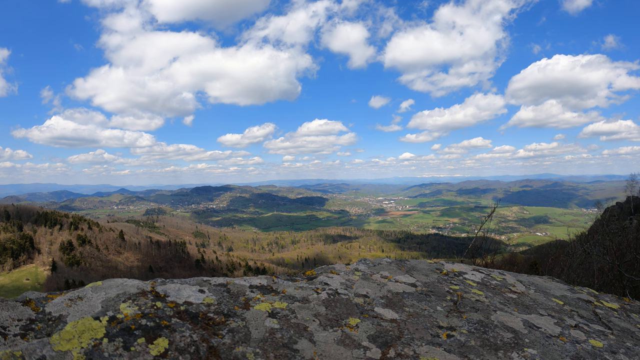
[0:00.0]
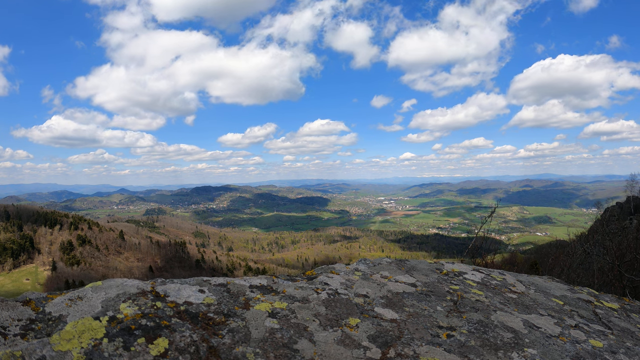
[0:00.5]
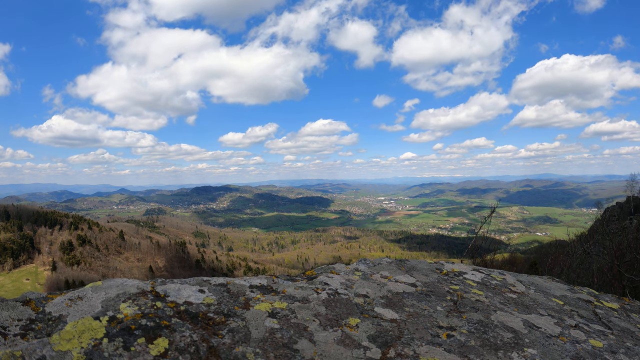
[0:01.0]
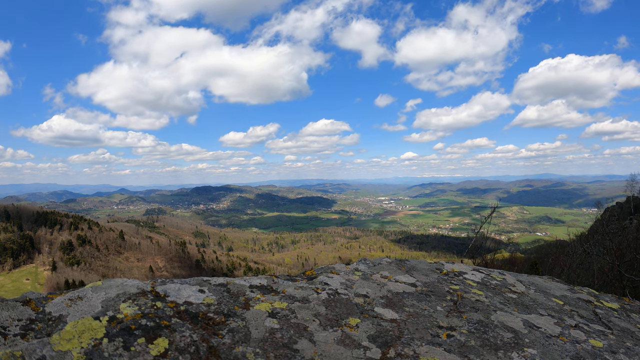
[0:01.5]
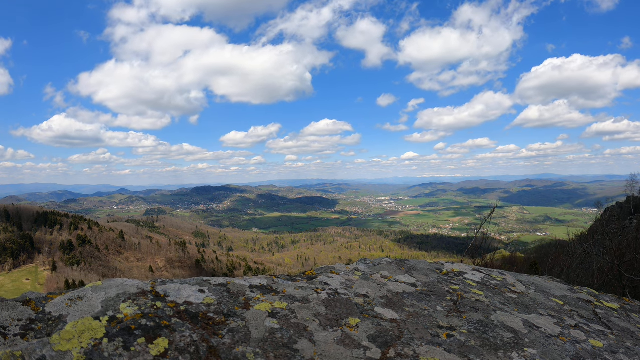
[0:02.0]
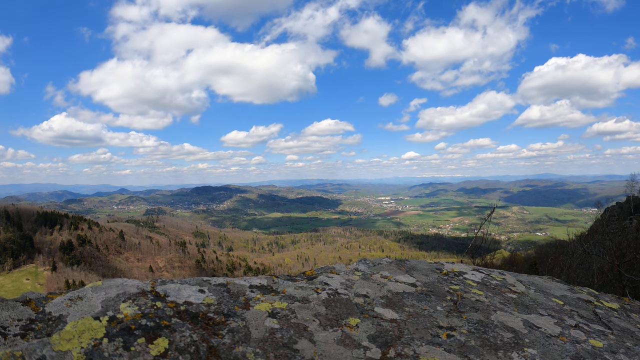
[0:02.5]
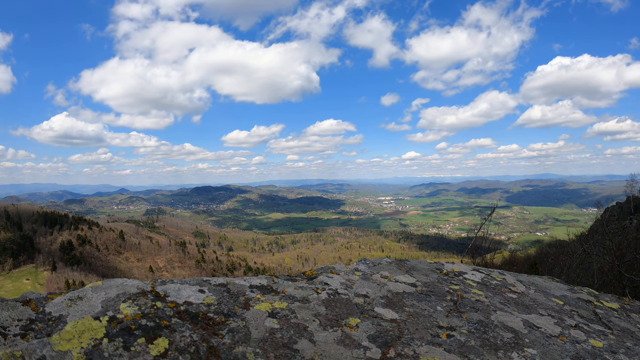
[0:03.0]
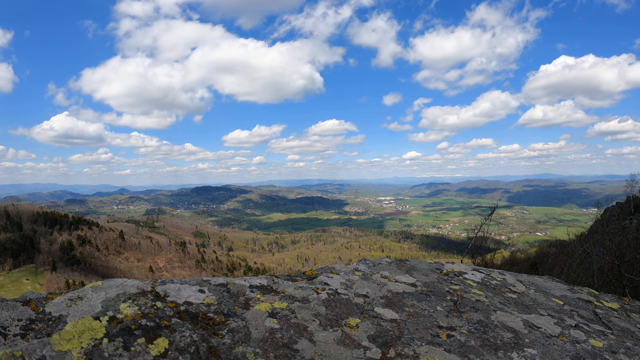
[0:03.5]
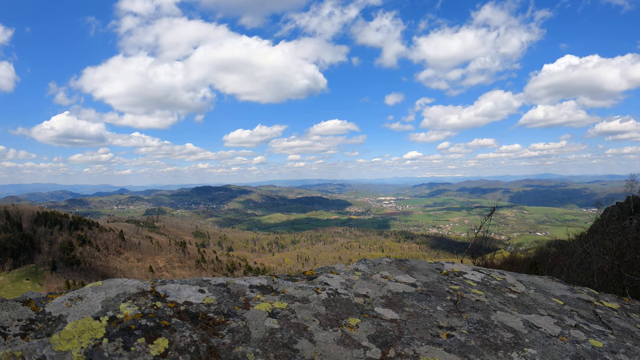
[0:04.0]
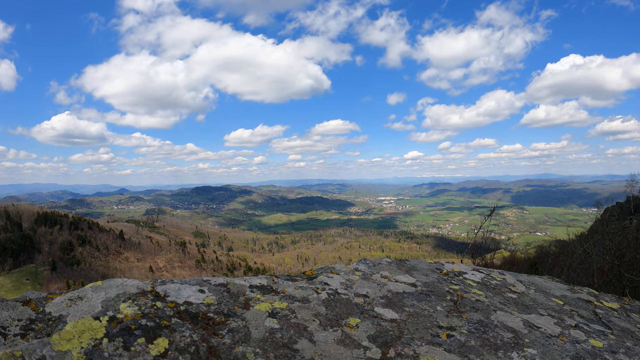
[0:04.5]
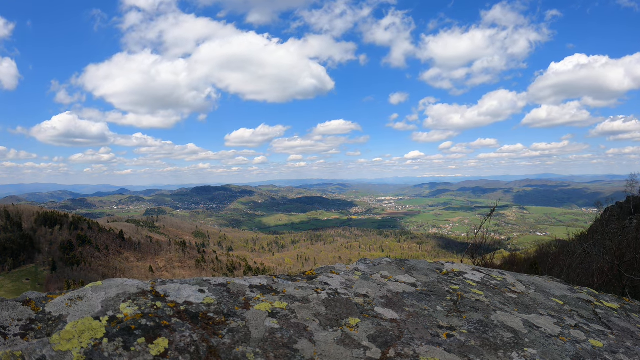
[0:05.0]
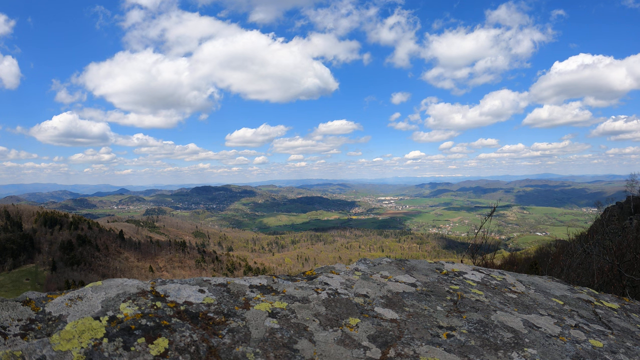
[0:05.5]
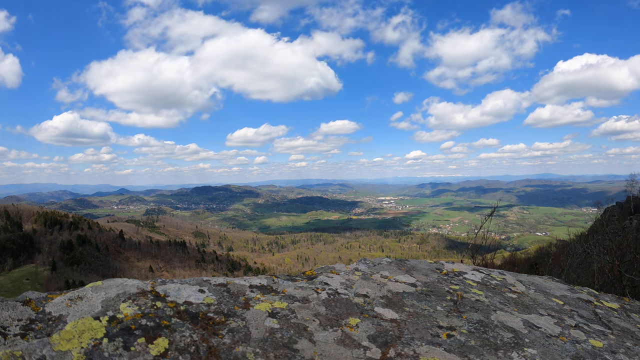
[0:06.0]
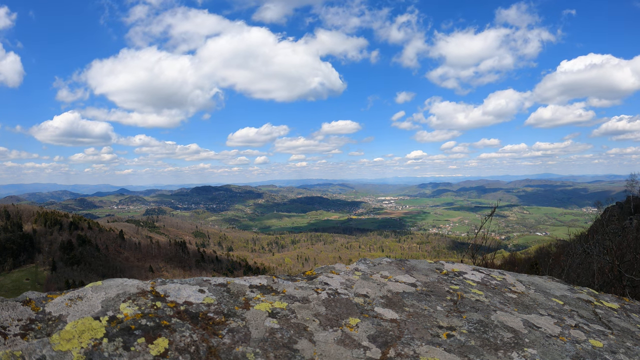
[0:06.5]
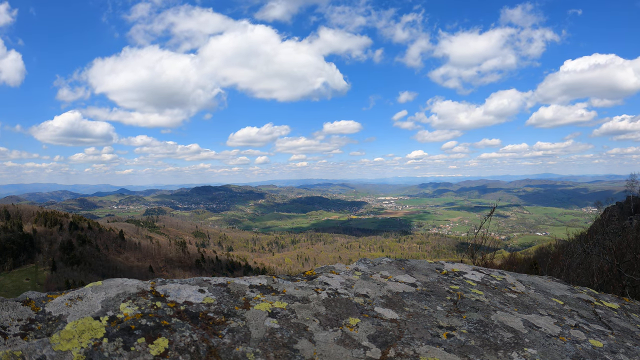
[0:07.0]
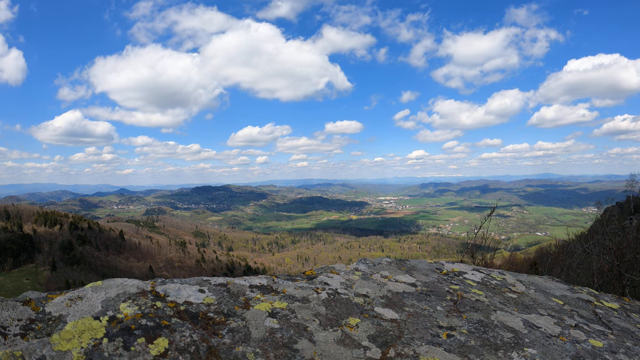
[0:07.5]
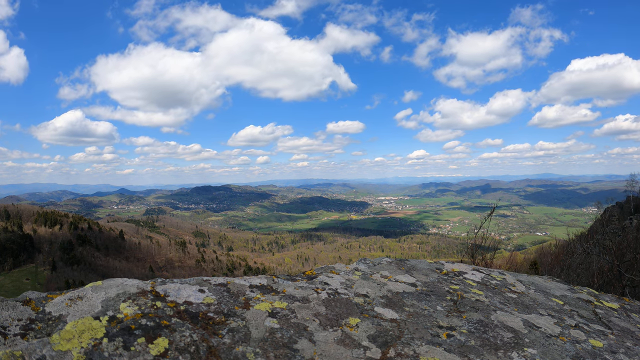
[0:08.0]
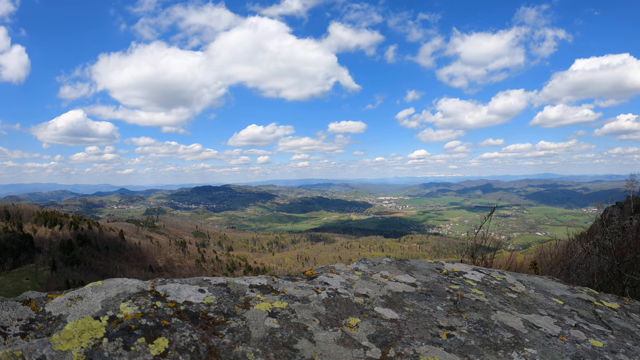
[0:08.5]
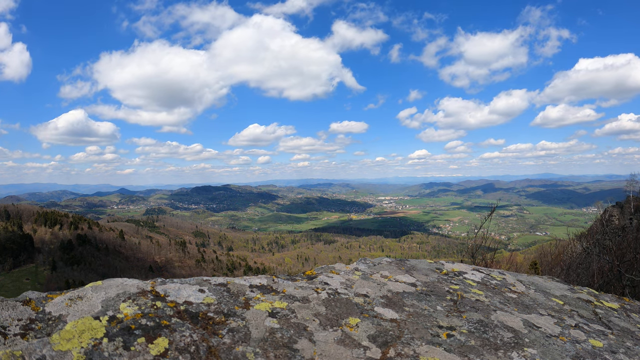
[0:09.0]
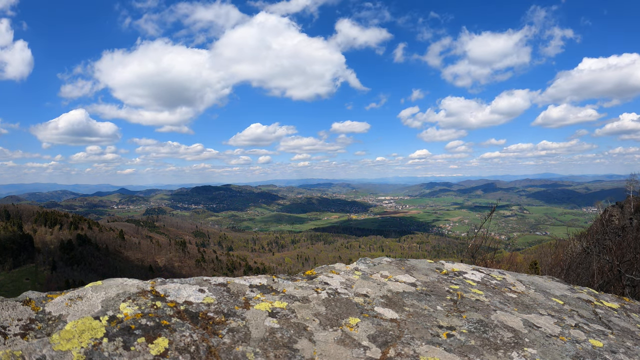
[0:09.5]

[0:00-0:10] The view is from the top of a mountain or large hill. Some rock is in the centre at the front of the screen near the camera, and beyond it the landscape goes on to fields and fields and hills, with villages dotted around. There are lots of trees and clouds. The clouds move in the breeze, and their shadows fall on the fields below. There are lots of green trees, with some brown among them as well. It is unclear what time of year it is, but it is a sunny day.